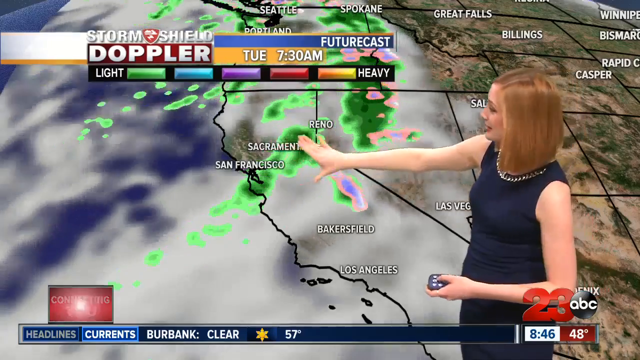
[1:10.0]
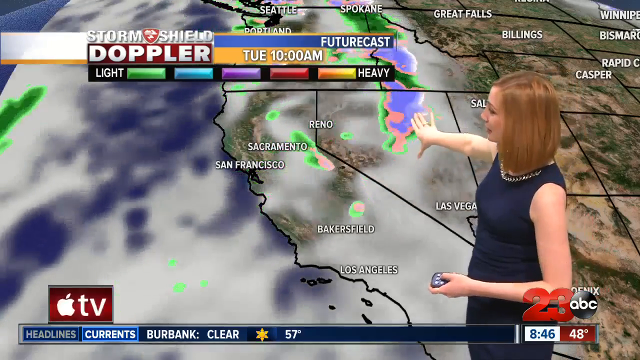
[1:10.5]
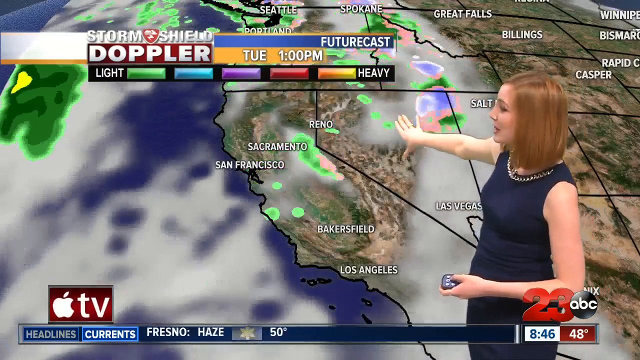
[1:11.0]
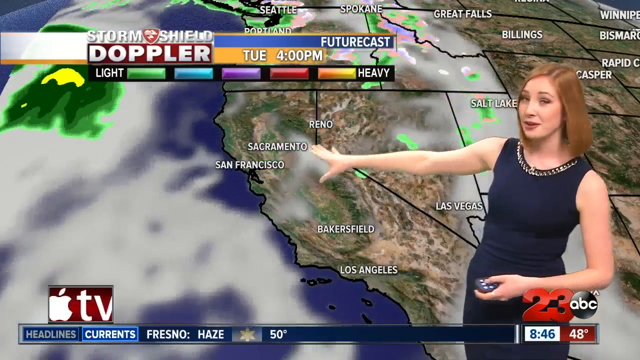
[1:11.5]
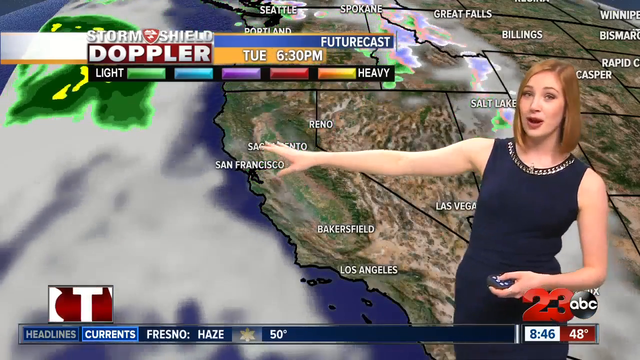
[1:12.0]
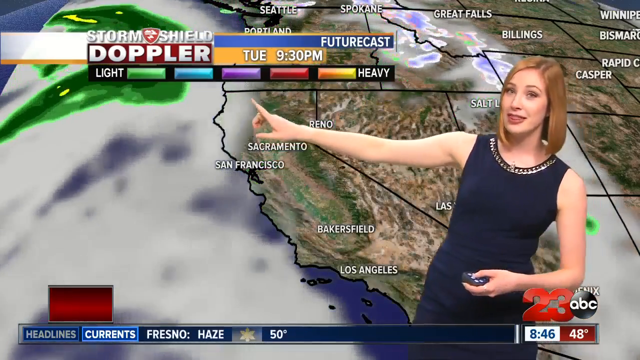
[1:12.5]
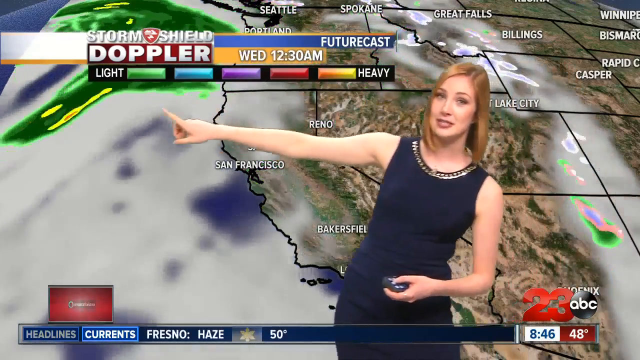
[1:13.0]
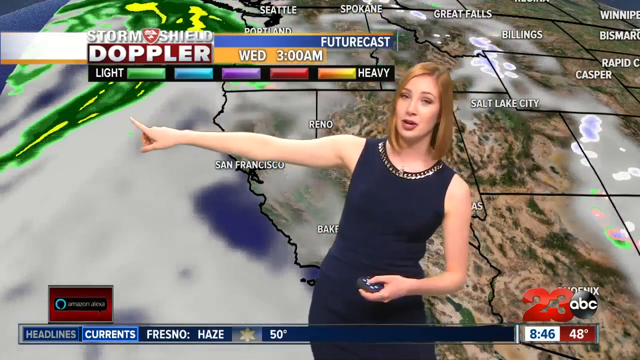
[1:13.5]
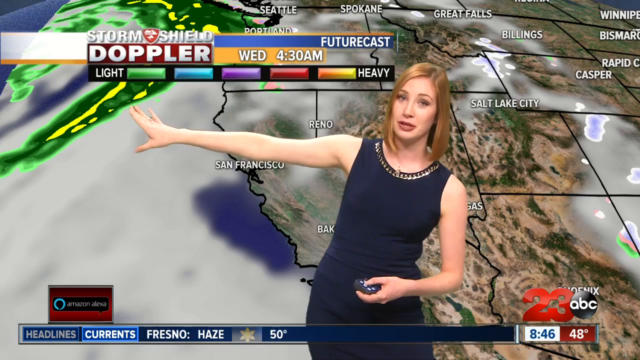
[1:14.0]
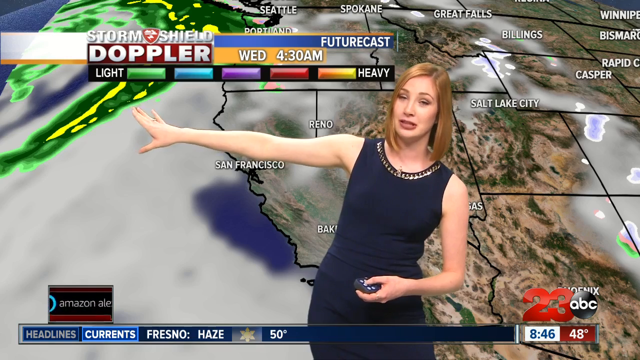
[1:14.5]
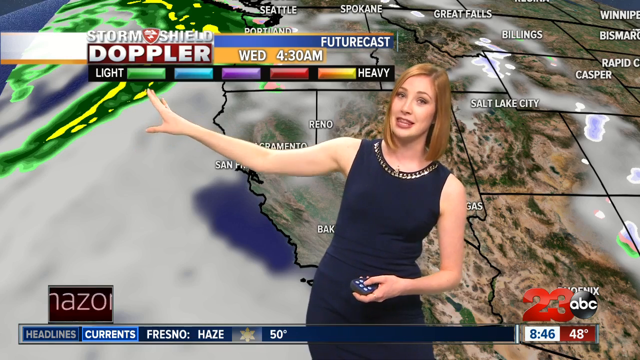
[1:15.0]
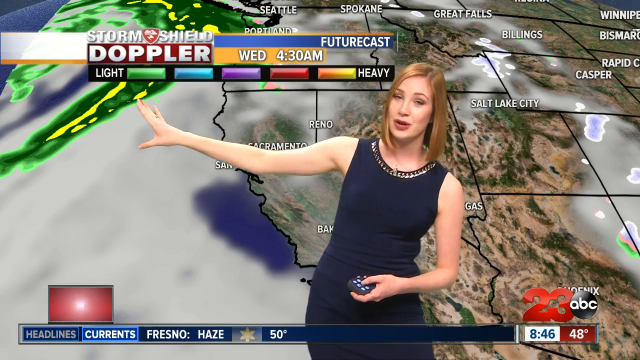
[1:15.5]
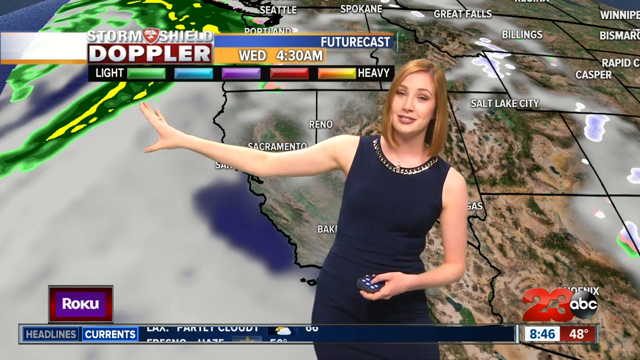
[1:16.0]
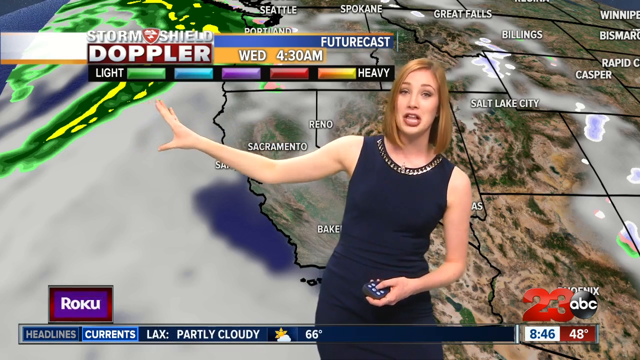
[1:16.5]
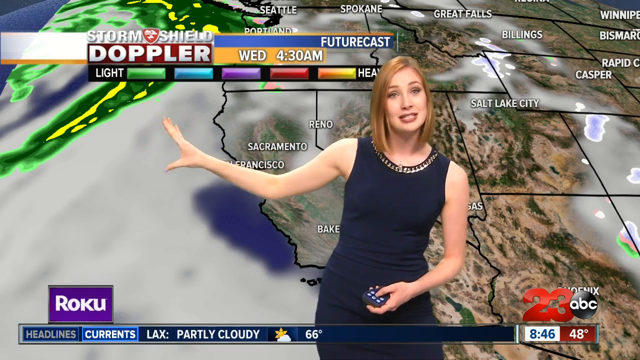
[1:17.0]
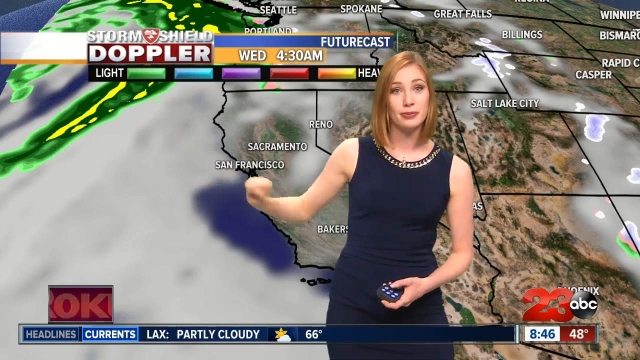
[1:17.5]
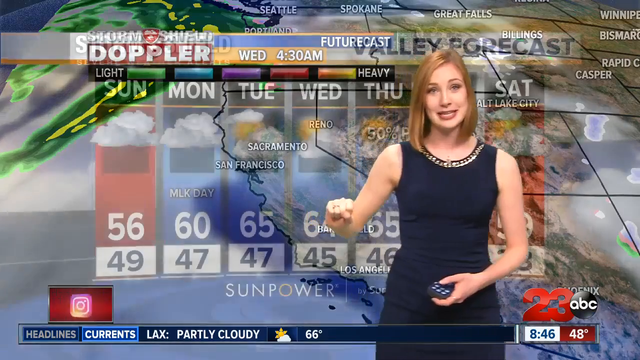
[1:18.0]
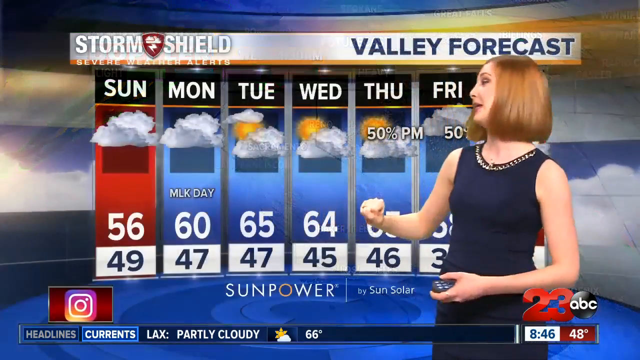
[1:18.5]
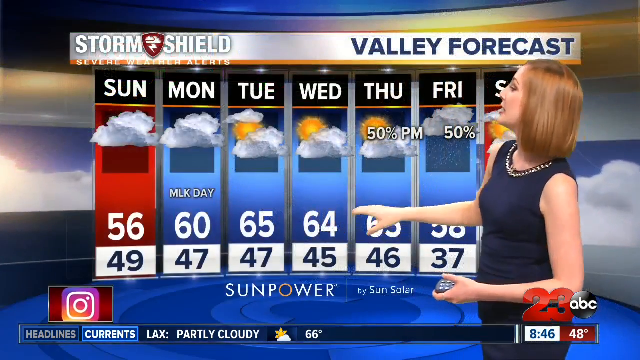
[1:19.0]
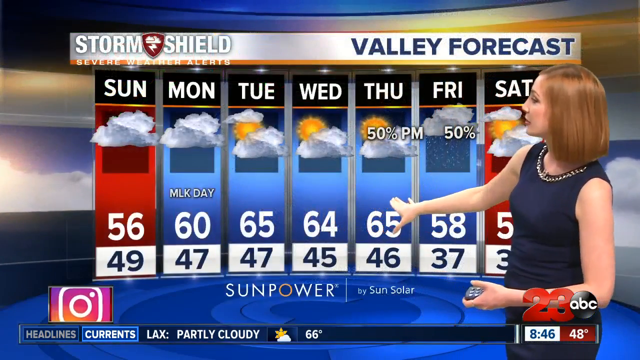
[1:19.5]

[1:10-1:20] The woman continues giving the forecast for certain cities, moving her hand to show places with rain, sun or storm. Colours such as green, pink, purple, red and yellow appear on the forecast over certain cities, apparently indicating how strong or light the weather will be at that time. The forecast covers Sunday through Saturday, and for each day she gives the times when the weather will be heavier or lighter. She then shows the Valley forecast: clouds on Sunday, clouds with a small sun on Tuesday, sun with some clouds on Wednesday, cloudy with 50 percent on Thursday, clouds with 50 percent on Friday, and a sunny day on Saturday.